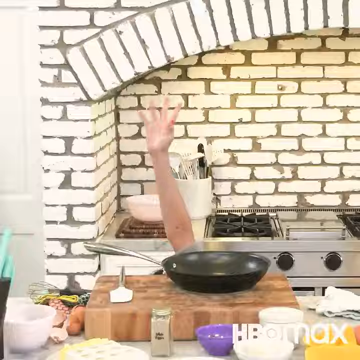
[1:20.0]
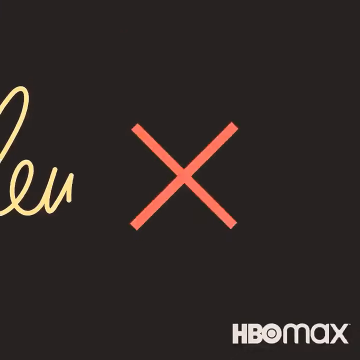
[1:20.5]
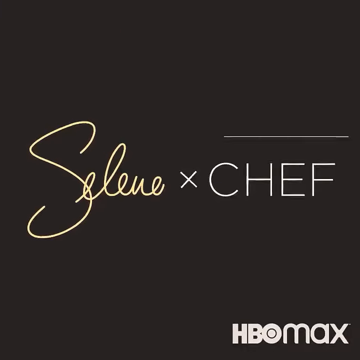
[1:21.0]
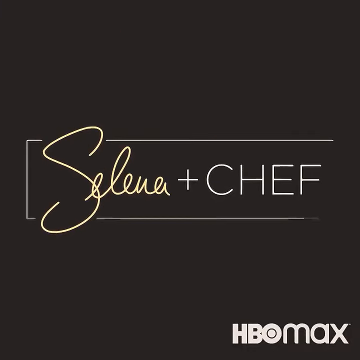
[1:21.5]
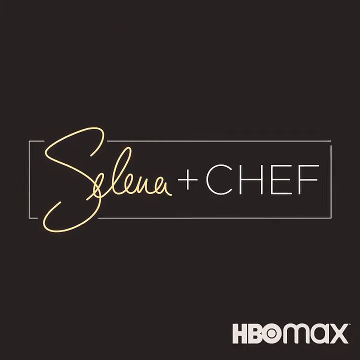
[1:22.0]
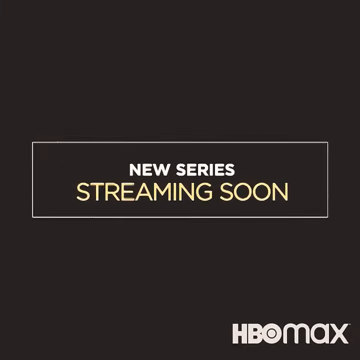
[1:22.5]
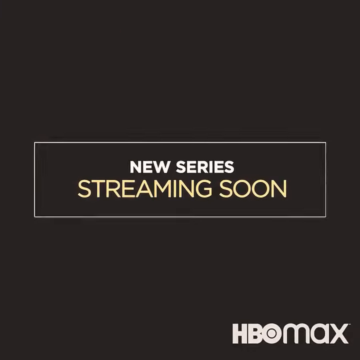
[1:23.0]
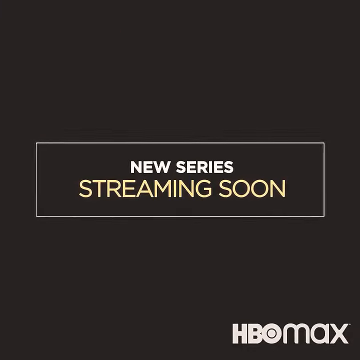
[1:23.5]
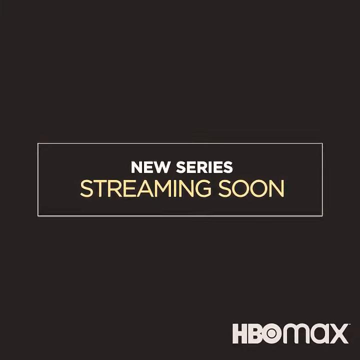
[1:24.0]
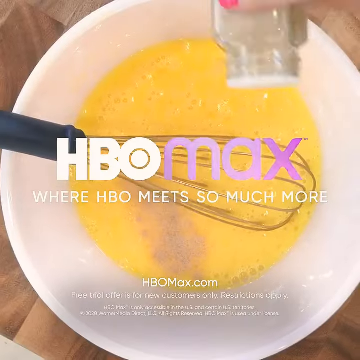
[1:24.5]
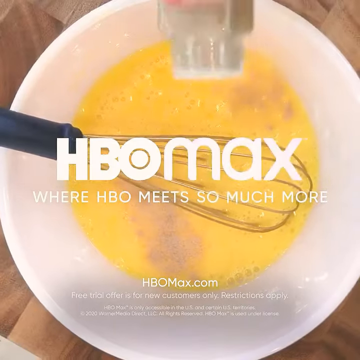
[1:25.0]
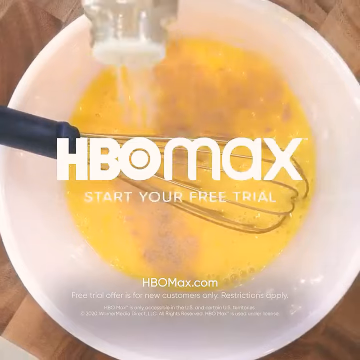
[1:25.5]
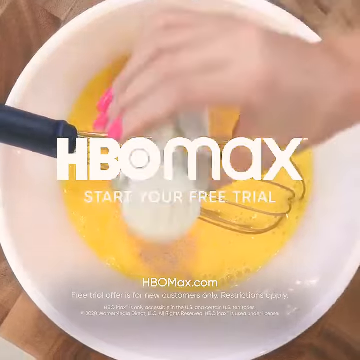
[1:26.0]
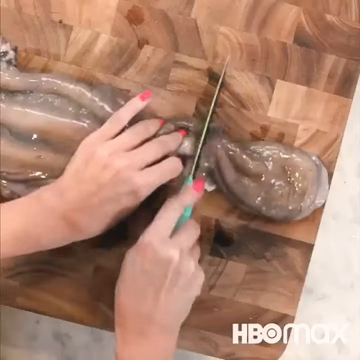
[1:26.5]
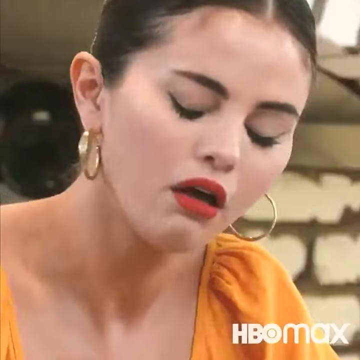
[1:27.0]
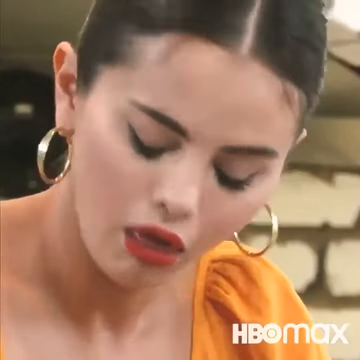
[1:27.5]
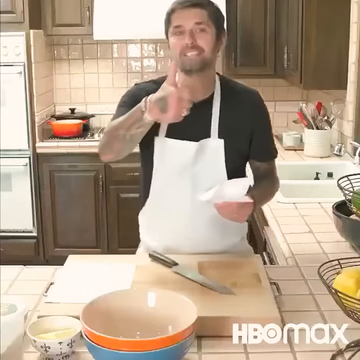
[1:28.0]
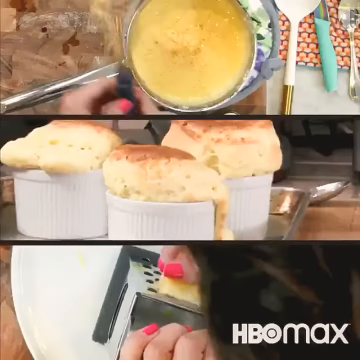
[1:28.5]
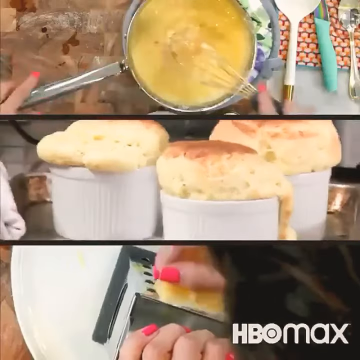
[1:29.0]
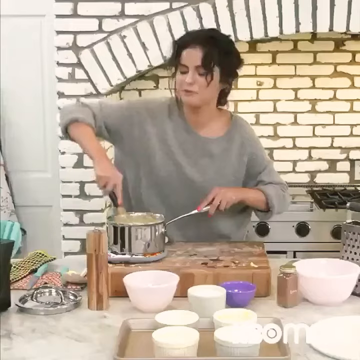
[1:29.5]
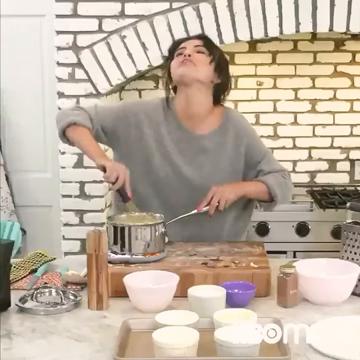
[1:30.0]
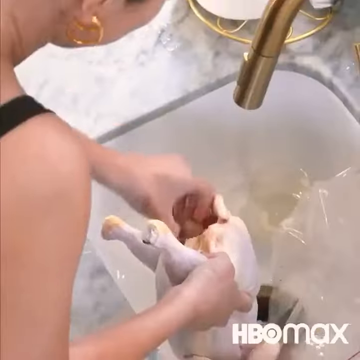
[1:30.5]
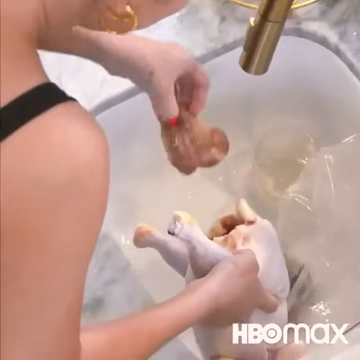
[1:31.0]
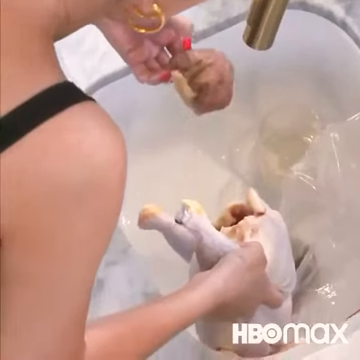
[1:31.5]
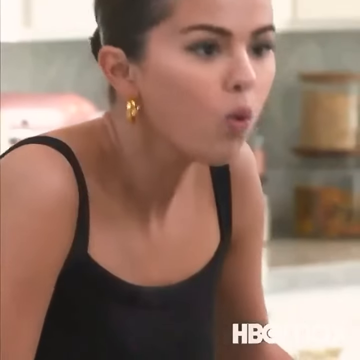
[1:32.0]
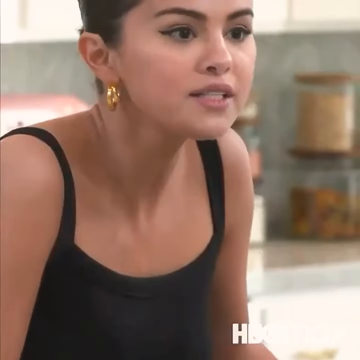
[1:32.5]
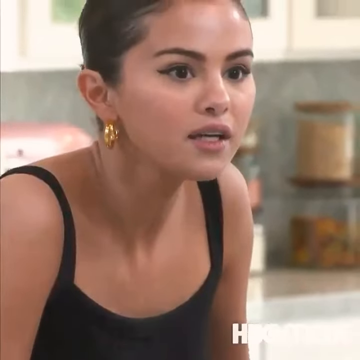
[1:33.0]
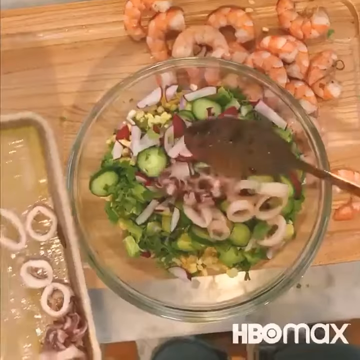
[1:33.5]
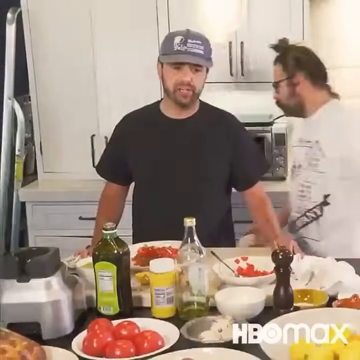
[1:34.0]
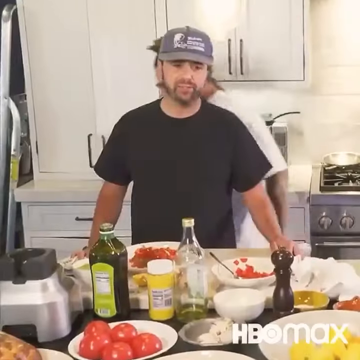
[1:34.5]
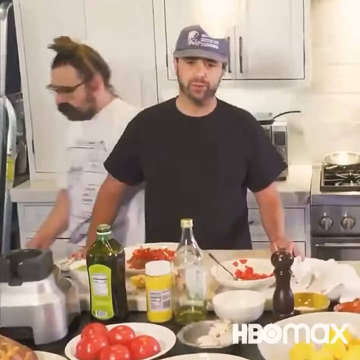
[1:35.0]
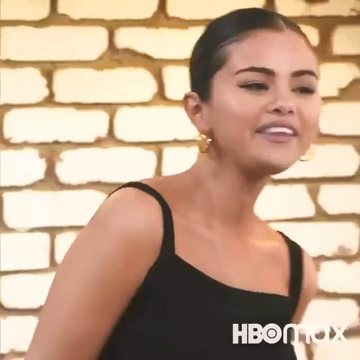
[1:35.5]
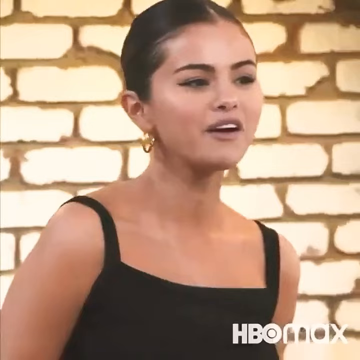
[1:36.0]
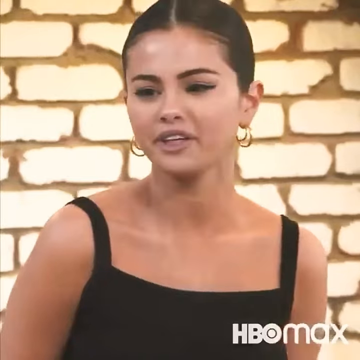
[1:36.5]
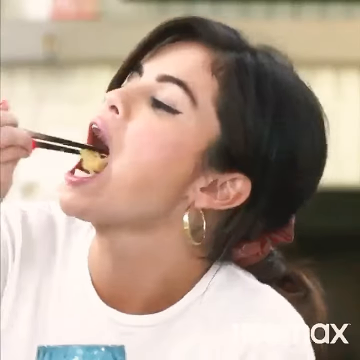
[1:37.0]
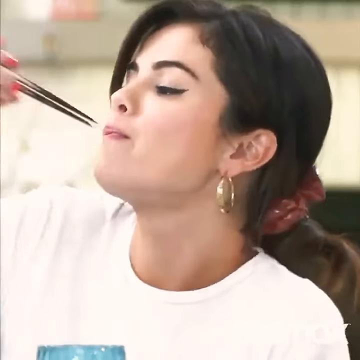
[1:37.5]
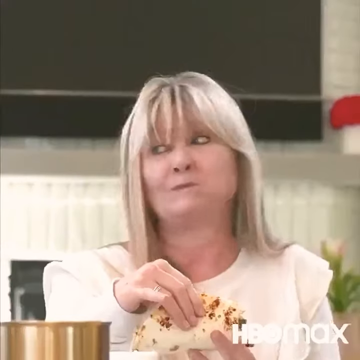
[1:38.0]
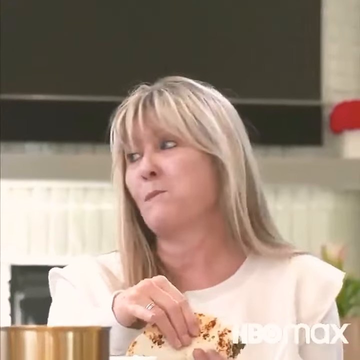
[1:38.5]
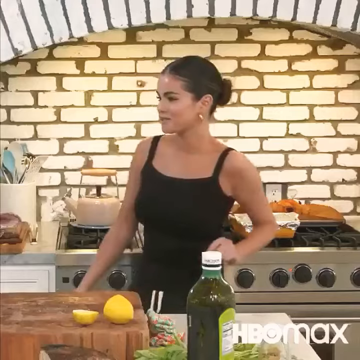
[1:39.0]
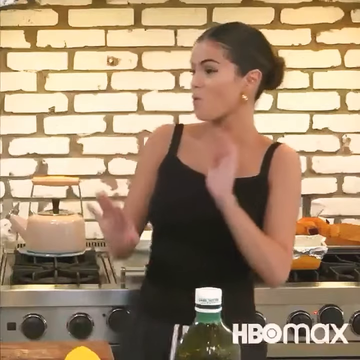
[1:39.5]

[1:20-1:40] The name of the show appears on a dark black background, reading "Selena plus Chef HBO Max", highlighting the name of host Selena Gomez. More scenes from the series follow, showing meals, some well made and some poorly made.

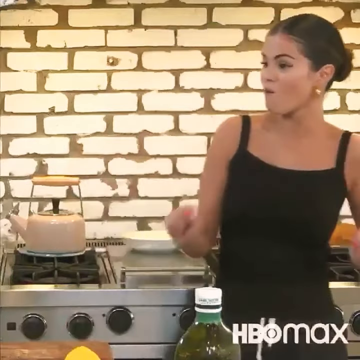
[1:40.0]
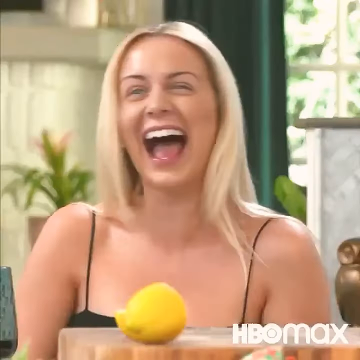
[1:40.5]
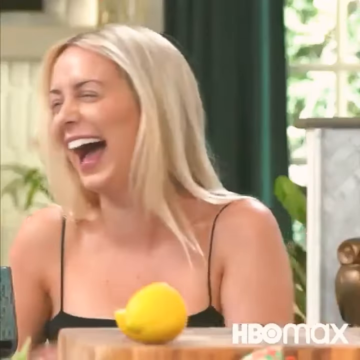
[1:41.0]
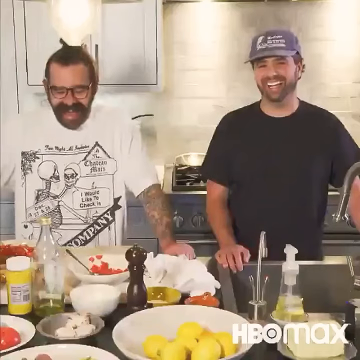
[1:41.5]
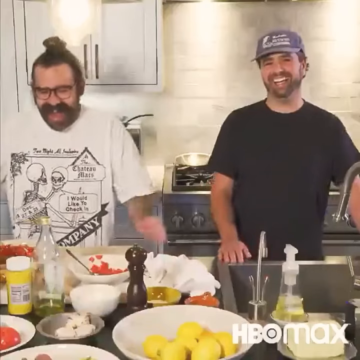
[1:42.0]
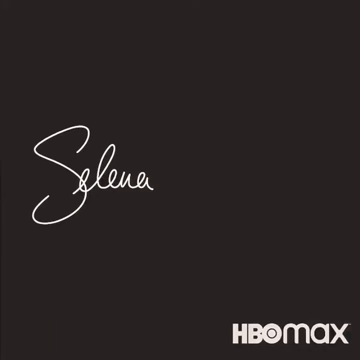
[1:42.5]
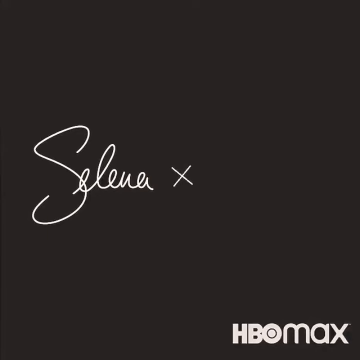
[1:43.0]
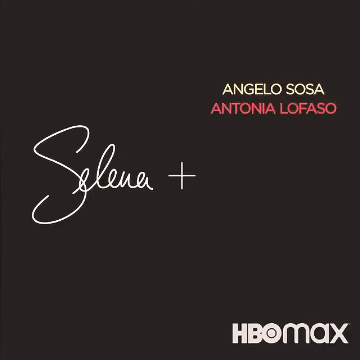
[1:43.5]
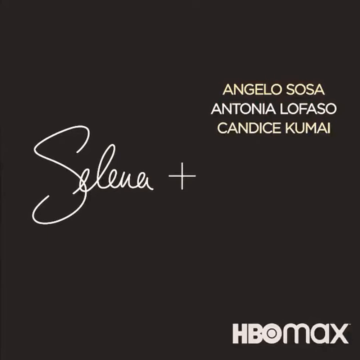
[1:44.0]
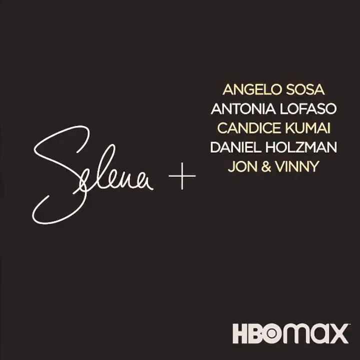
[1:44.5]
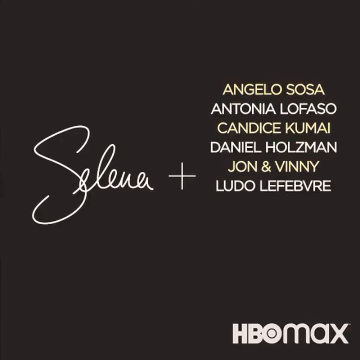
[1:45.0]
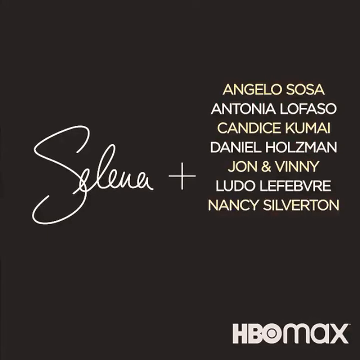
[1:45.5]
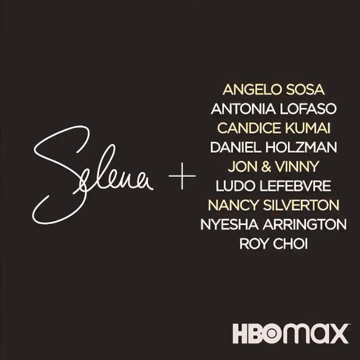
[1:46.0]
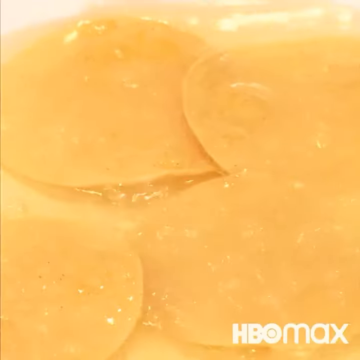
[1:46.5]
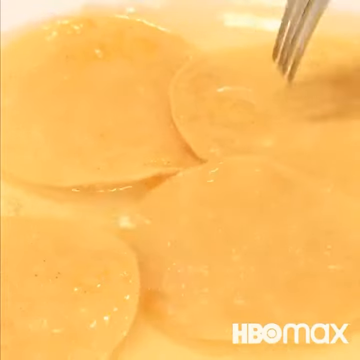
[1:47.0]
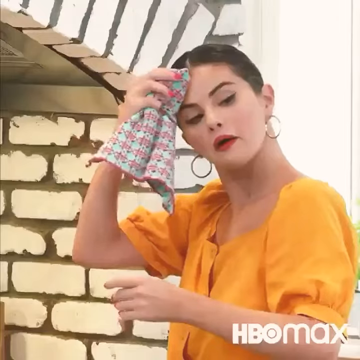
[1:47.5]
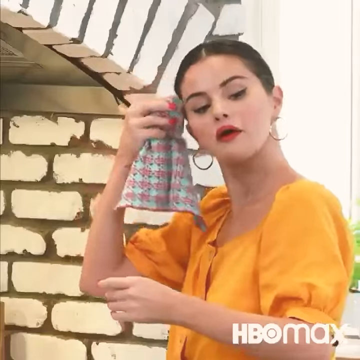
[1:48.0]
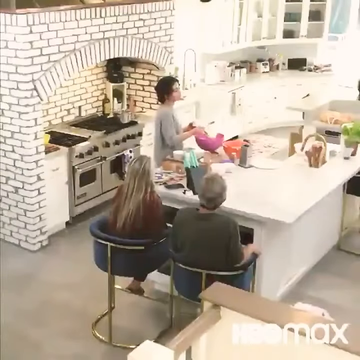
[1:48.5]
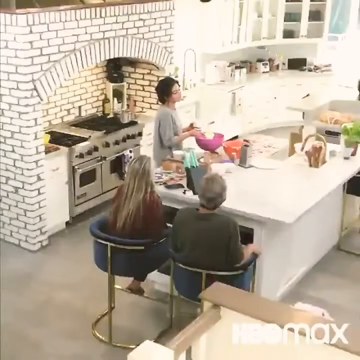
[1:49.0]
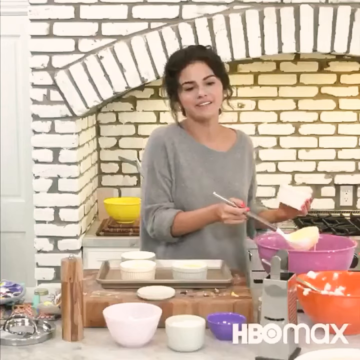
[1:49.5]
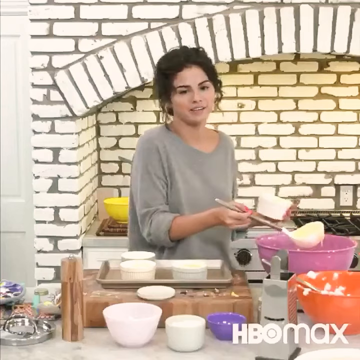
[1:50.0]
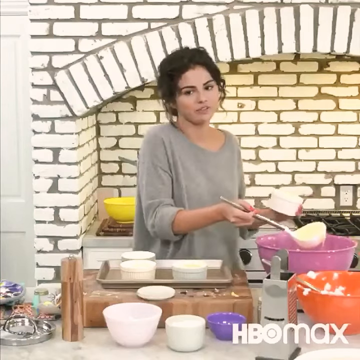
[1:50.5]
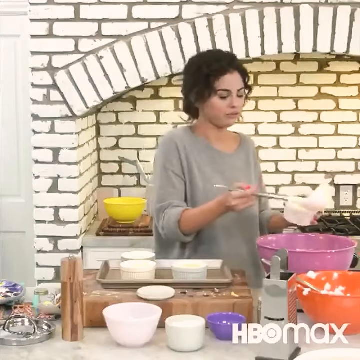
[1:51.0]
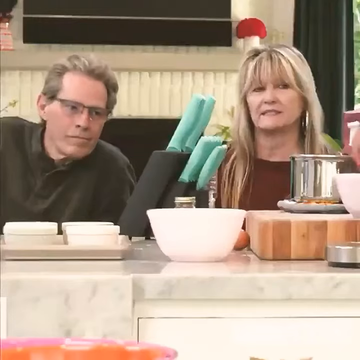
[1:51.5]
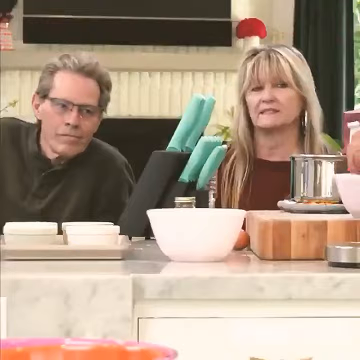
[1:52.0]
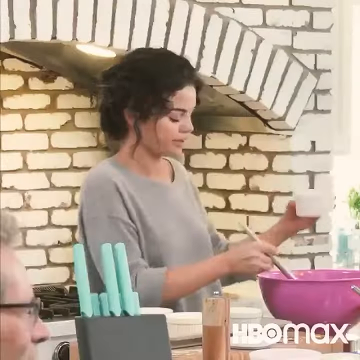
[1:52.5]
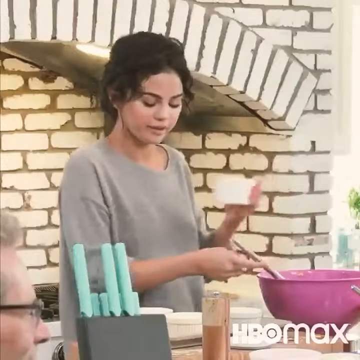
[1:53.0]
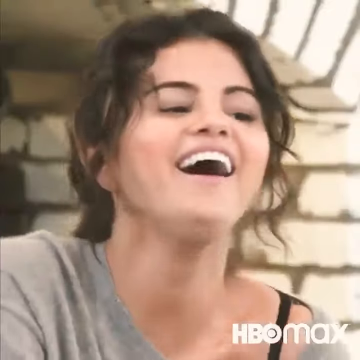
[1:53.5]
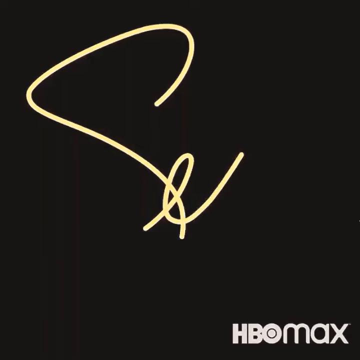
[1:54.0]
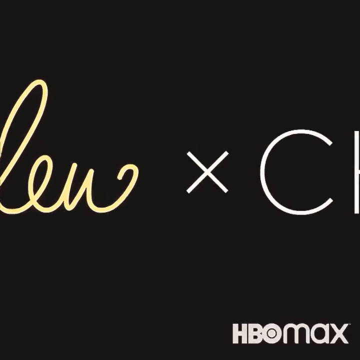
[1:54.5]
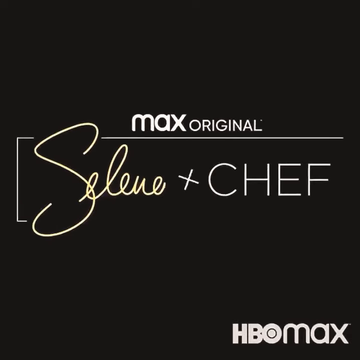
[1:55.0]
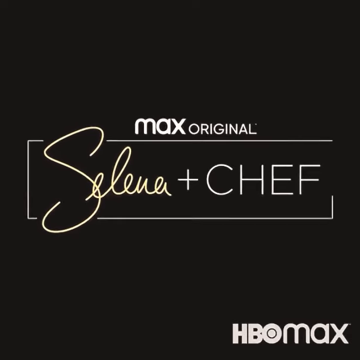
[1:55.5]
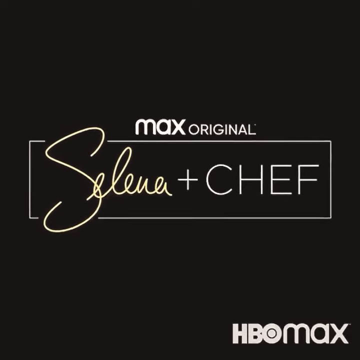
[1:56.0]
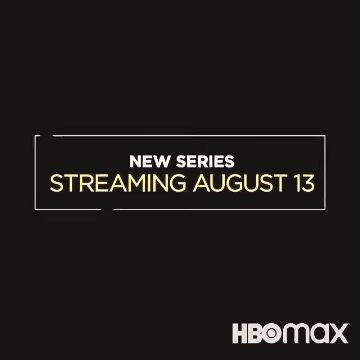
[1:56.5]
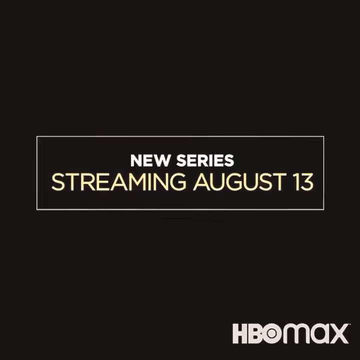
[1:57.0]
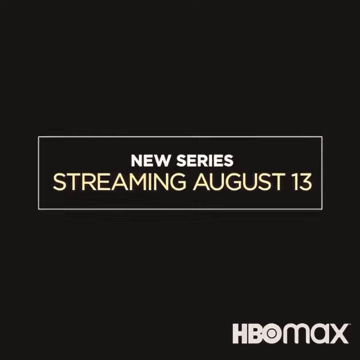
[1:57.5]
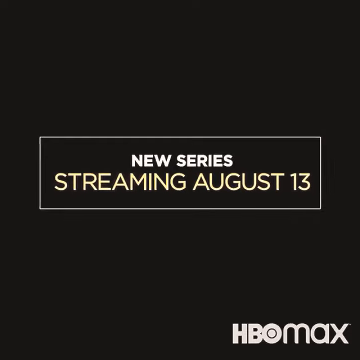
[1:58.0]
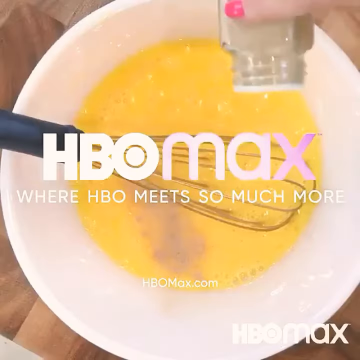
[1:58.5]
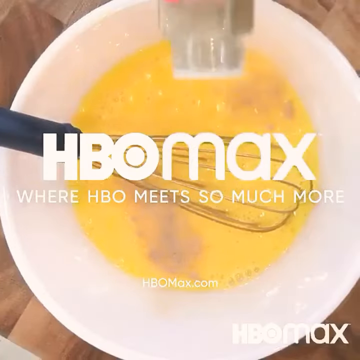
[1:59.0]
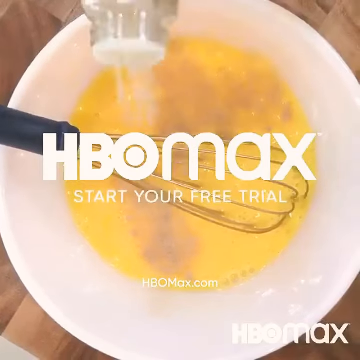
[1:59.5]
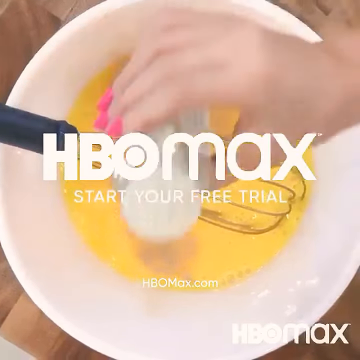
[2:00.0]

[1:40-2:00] The participants are shown laughing and having fun during the program. The show's name appears on the screen again, this time with the names of the participants: Angelo Souza, Antônio Lofazo, Candice Kumai, Daniel Rosman, Johnny Vini, Ludo Lefebvre, Nancy Silverton, Niesha Arrington, Roy Choi and Tânia Holland, who join Selena Gomez. A few more scenes appear, and finally the Max Original logo appears again with the program's name. The ad announces that the new series streams on HBO Max from August 13th.